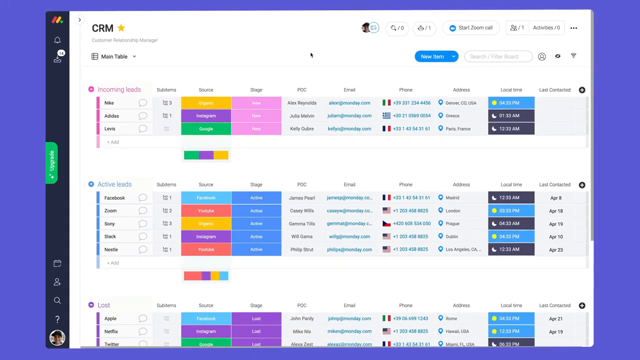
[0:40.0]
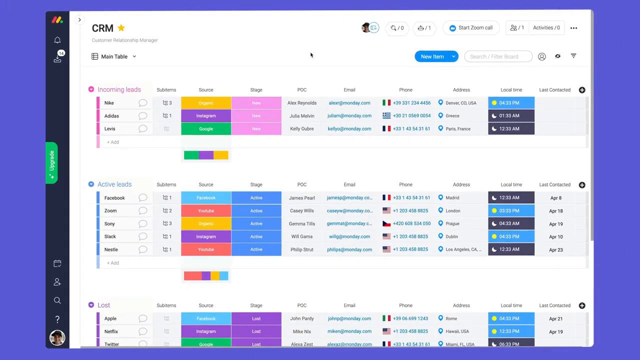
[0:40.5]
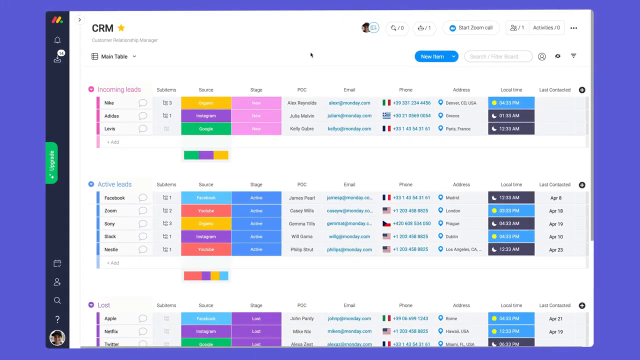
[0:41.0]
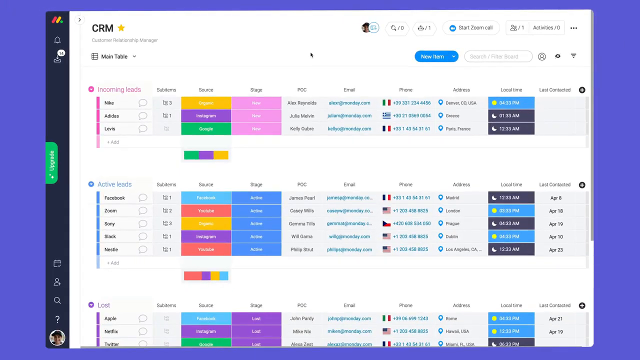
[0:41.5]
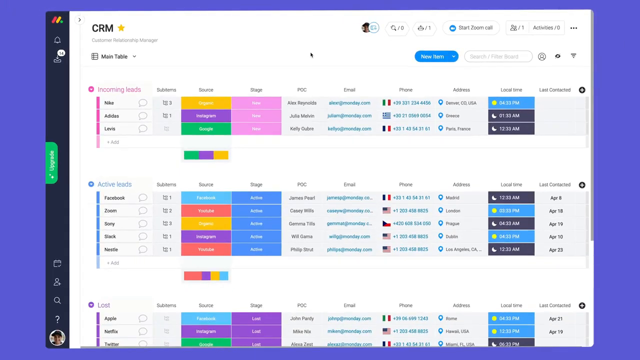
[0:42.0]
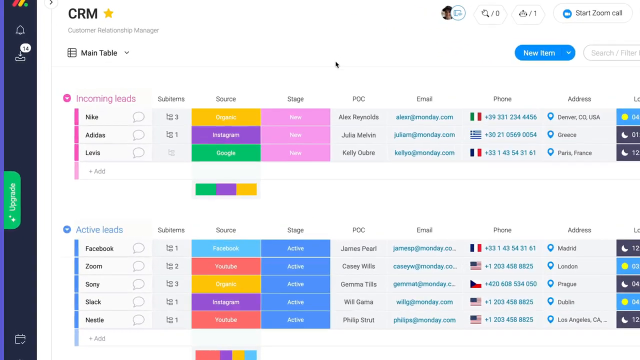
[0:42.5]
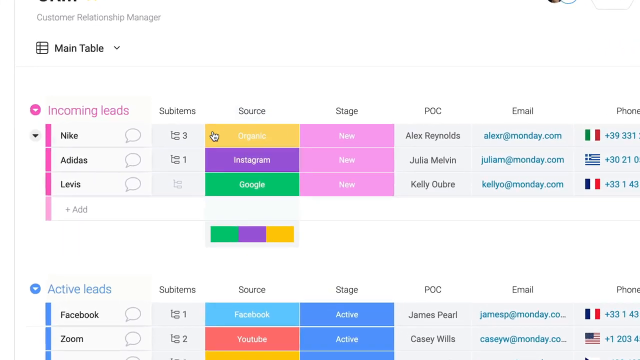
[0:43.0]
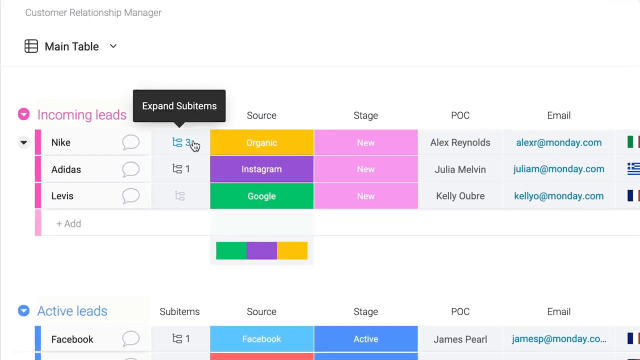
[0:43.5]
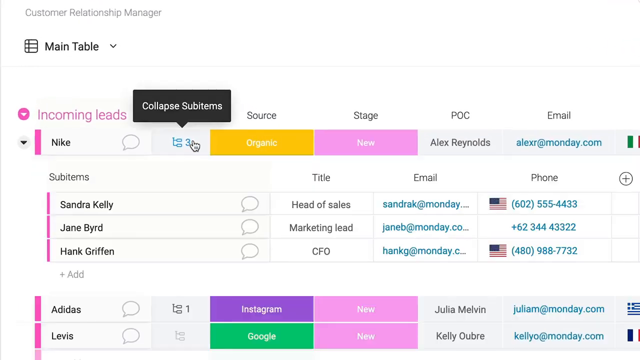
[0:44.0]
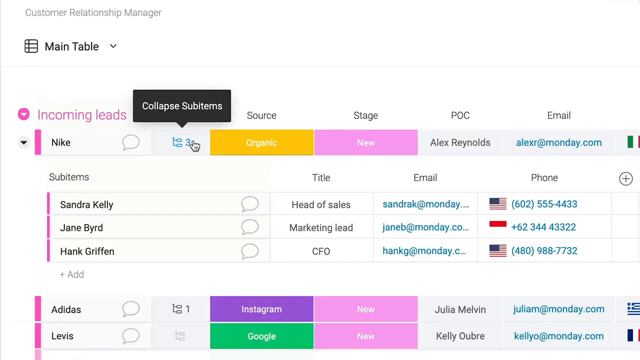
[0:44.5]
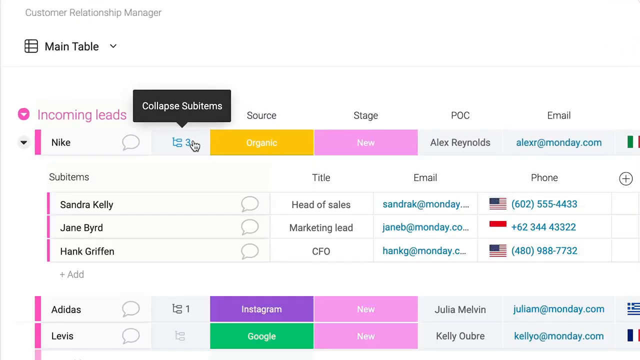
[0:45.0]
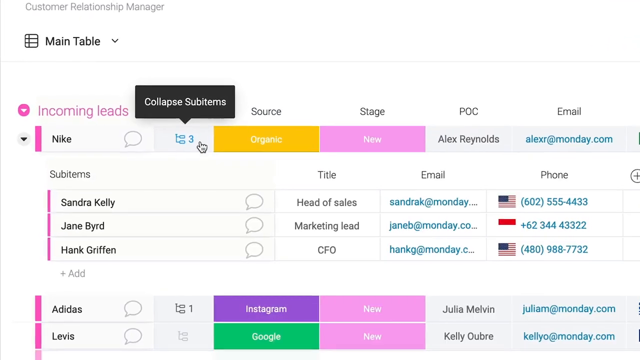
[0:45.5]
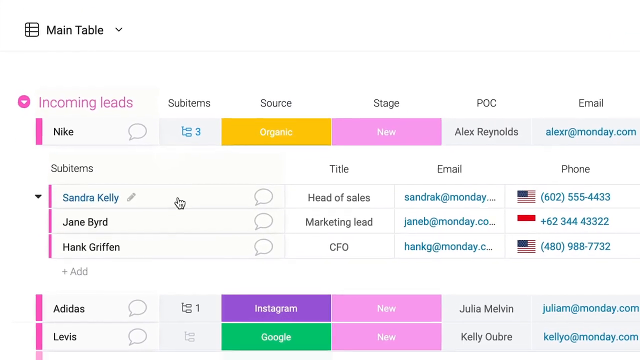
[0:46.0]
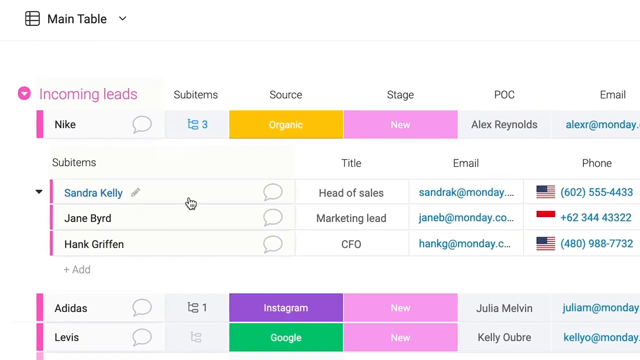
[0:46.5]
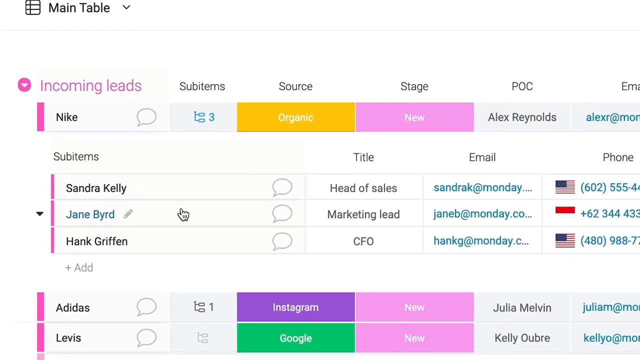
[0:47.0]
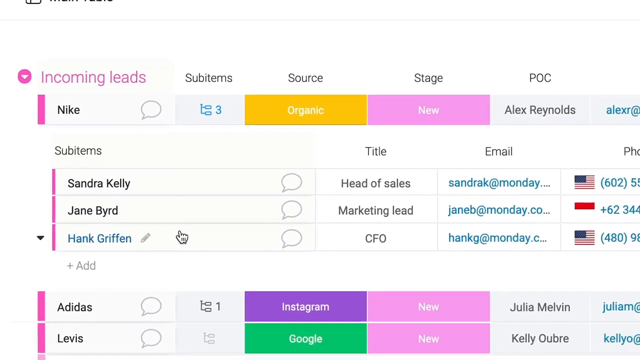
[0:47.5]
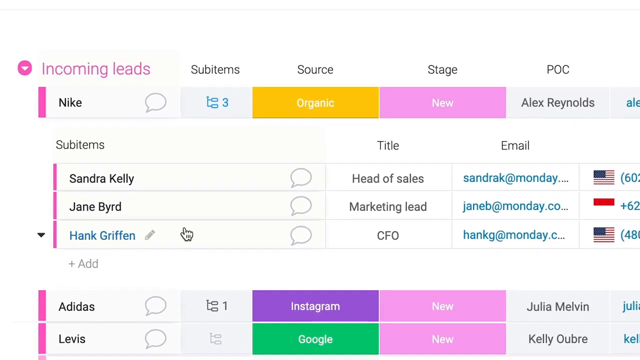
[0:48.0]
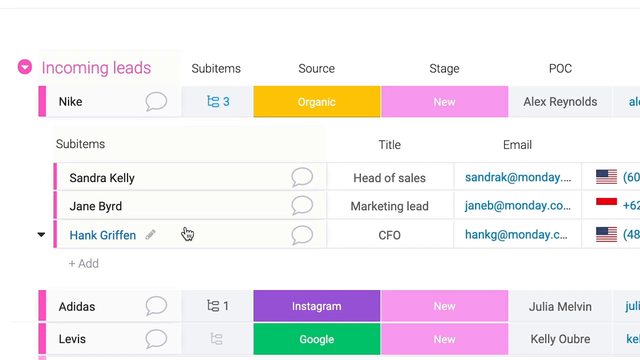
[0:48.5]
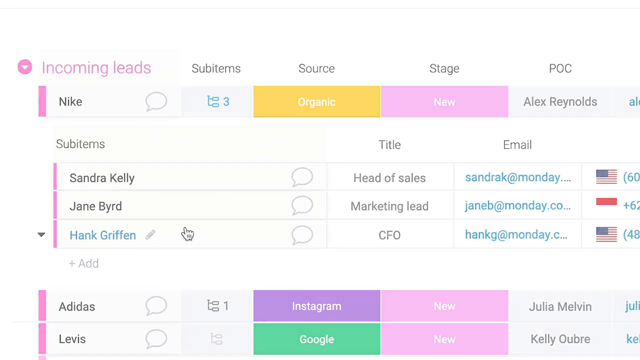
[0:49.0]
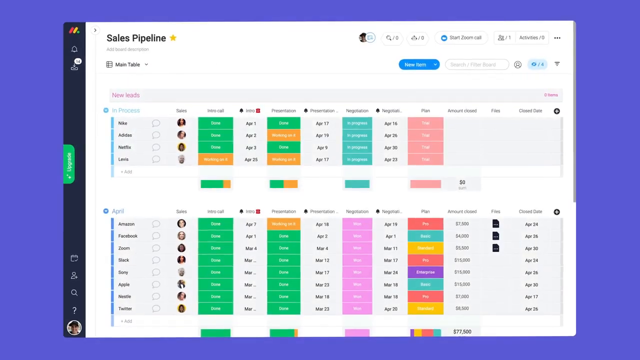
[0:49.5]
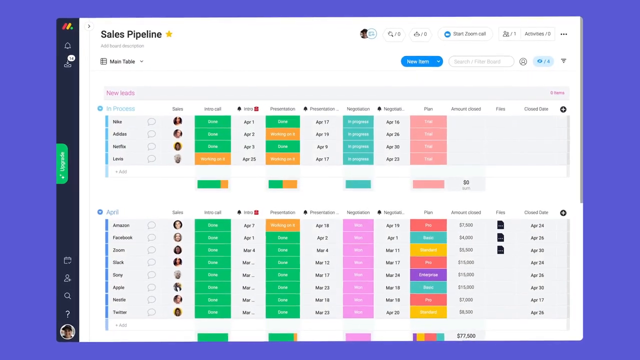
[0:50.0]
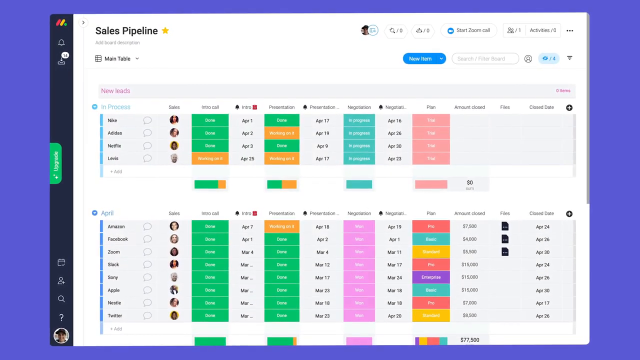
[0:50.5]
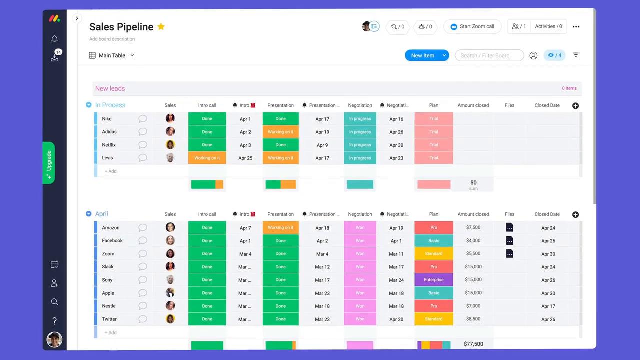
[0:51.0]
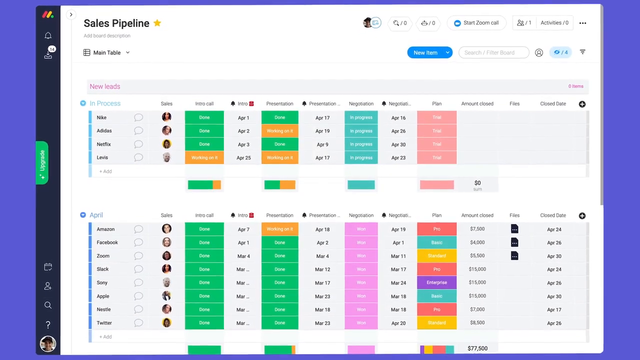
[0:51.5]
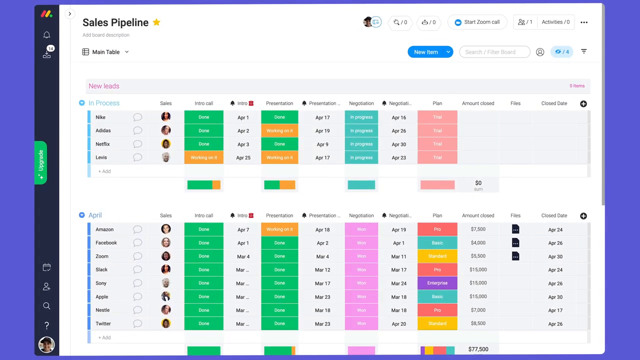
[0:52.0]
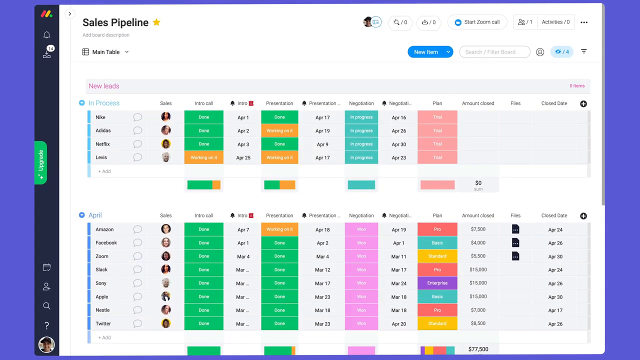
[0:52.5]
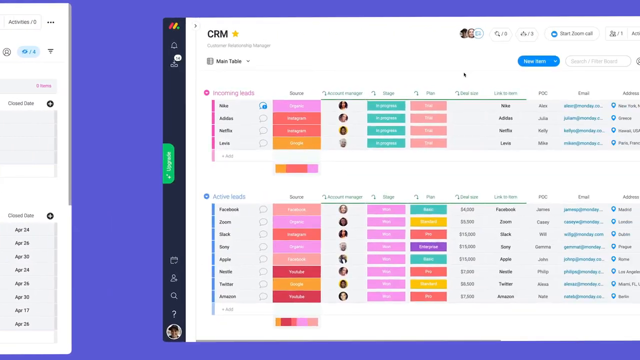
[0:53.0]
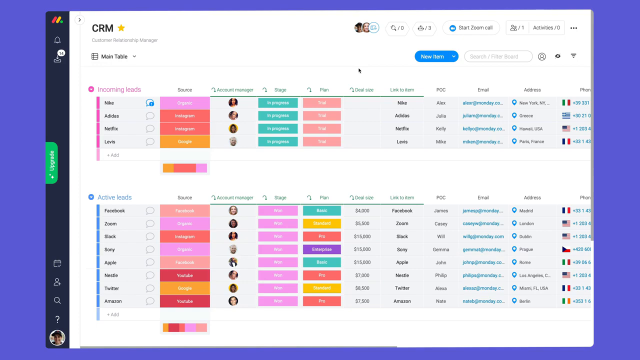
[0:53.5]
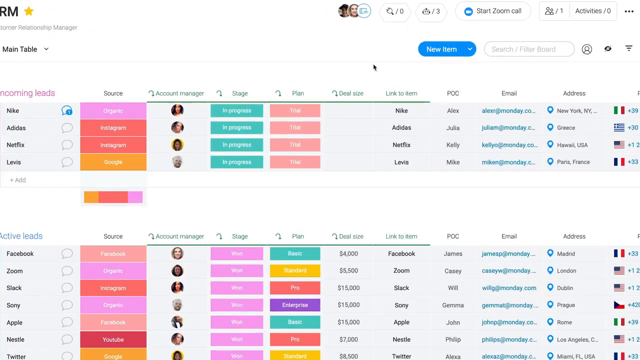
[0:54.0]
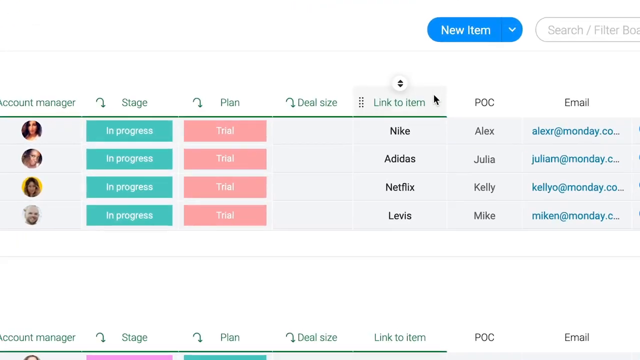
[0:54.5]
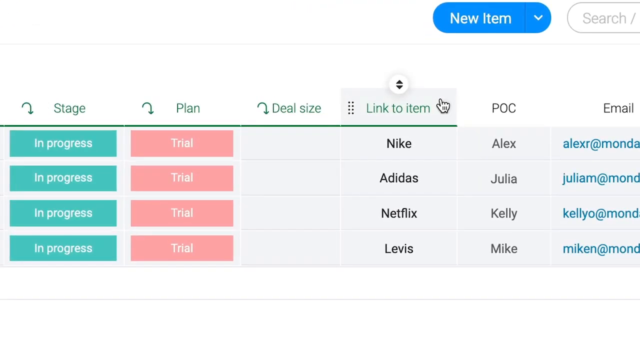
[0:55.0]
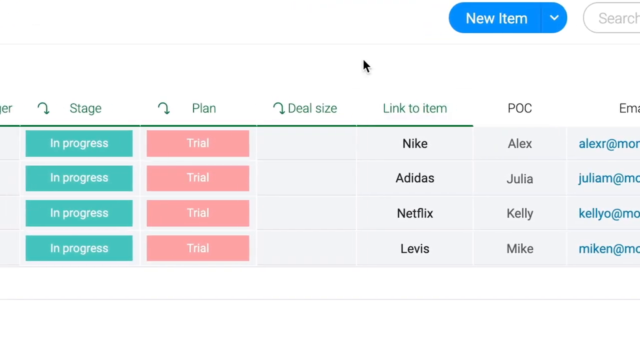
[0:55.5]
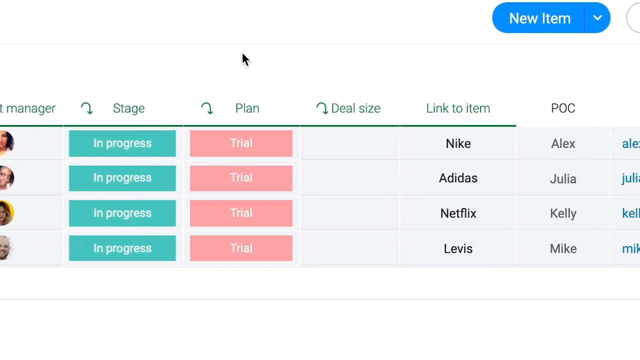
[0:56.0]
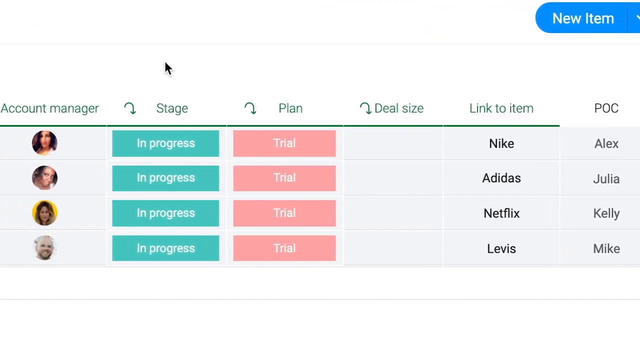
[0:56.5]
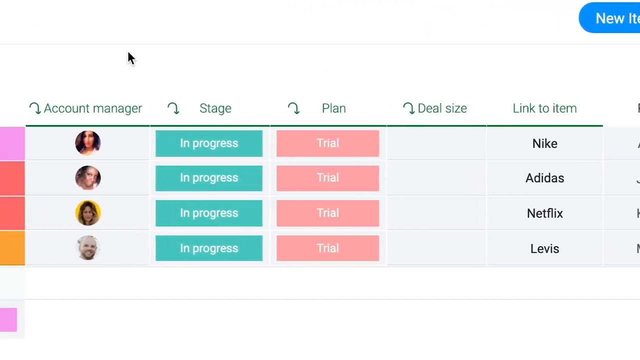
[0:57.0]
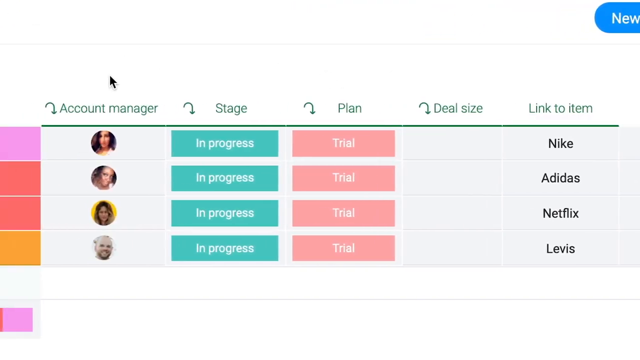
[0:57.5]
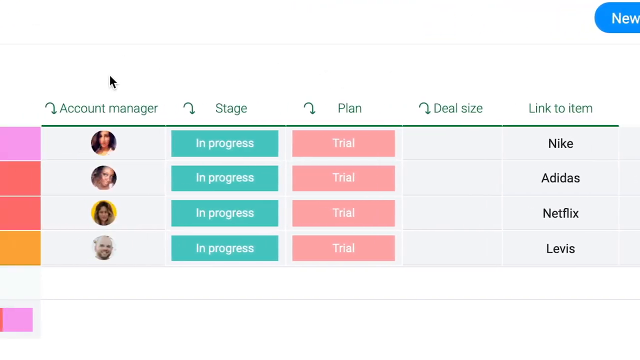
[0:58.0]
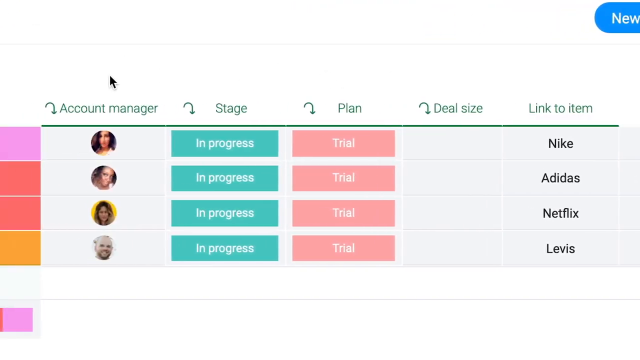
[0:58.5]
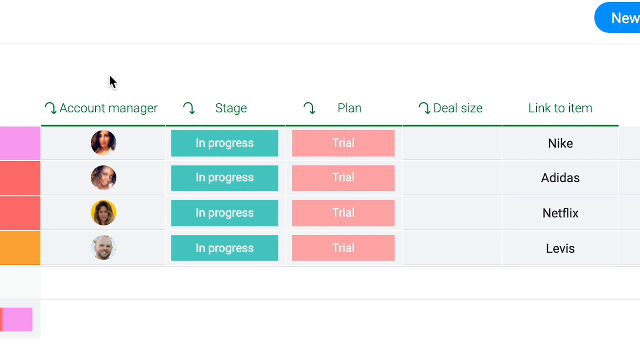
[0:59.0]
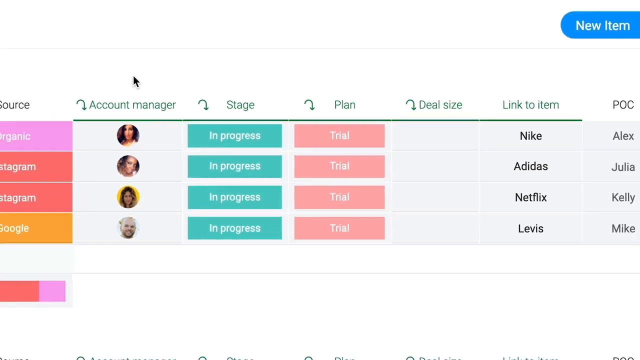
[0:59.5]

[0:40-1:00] The computer program is on screen, and someone is still manipulating the computer remotely. The view zooms in on a row titled sub-items, then scrolls down to three different people and clicks on Hank Griffin. The next screen says "sales pipeline" in the top left-hand corner, with multiple graphs on the page. The next page is zoomed into different graphs and columns. There is an account manager column with four different profile pictures underneath it, along with stage, plan, deal size, and link to item. Under link to item are Nike, Adidas, Netflix, and Levi's. Under stage, all four boxes say "in progress," and under plan, all four say "trial." To the right of link to item is the POC column with the names Alex, Julia, Kelly, and Mike.